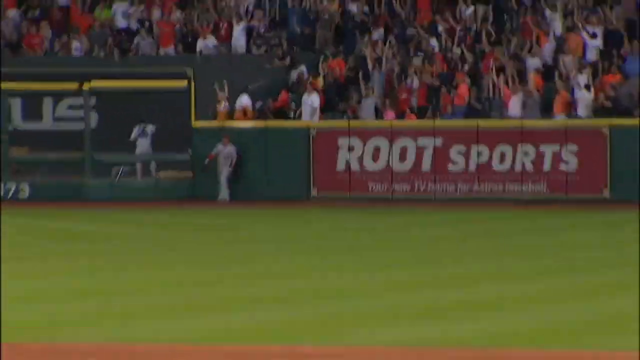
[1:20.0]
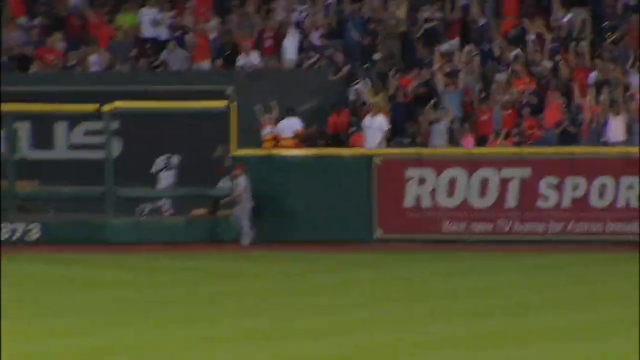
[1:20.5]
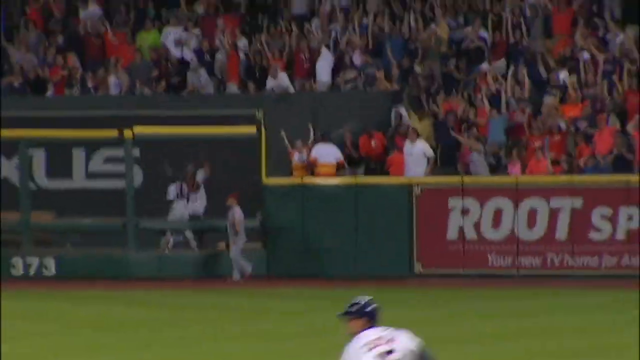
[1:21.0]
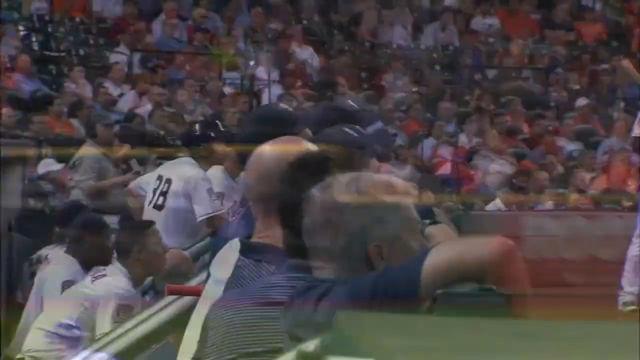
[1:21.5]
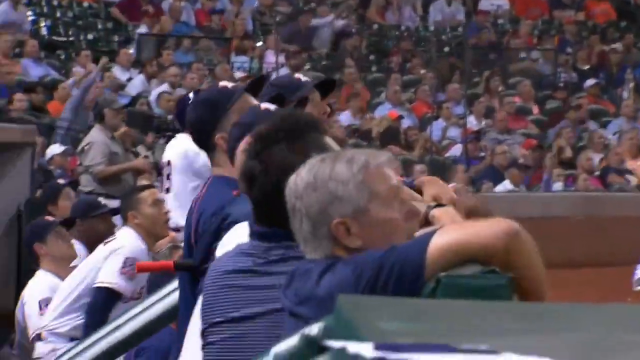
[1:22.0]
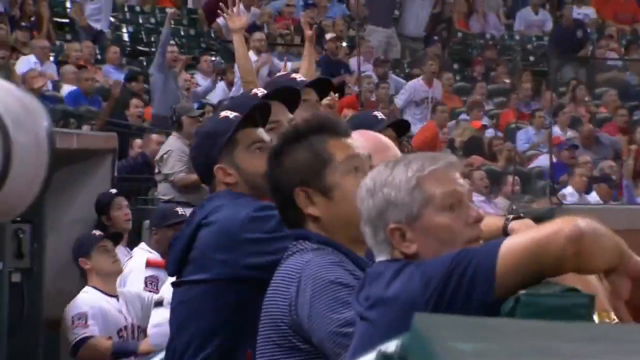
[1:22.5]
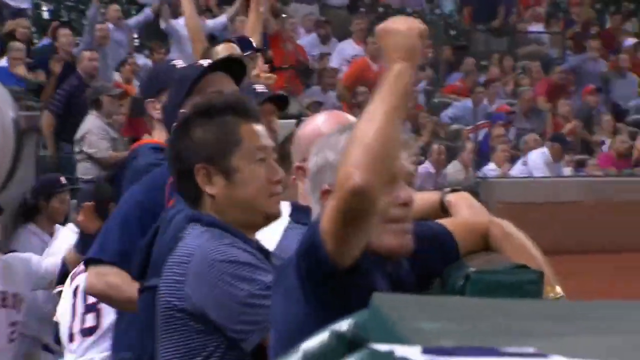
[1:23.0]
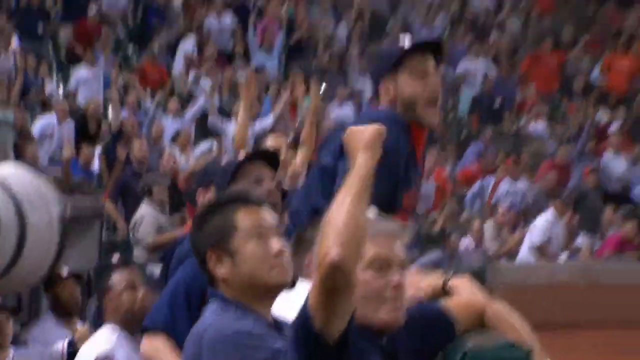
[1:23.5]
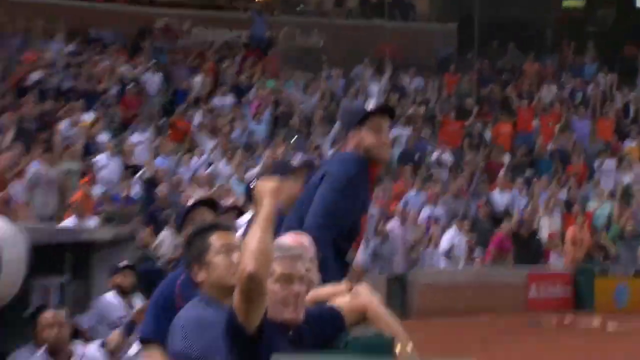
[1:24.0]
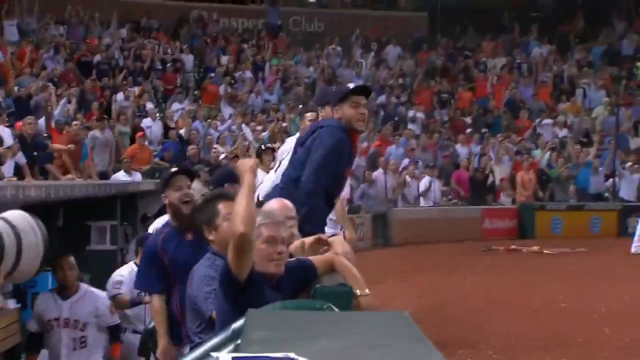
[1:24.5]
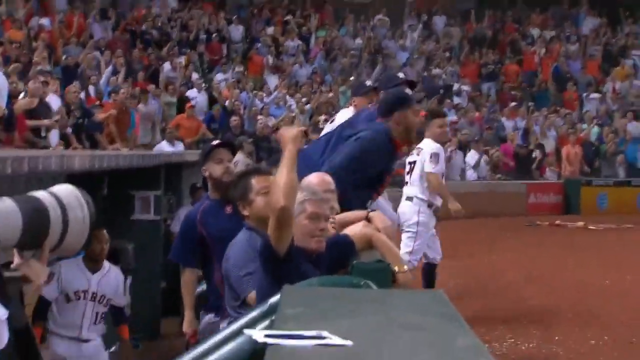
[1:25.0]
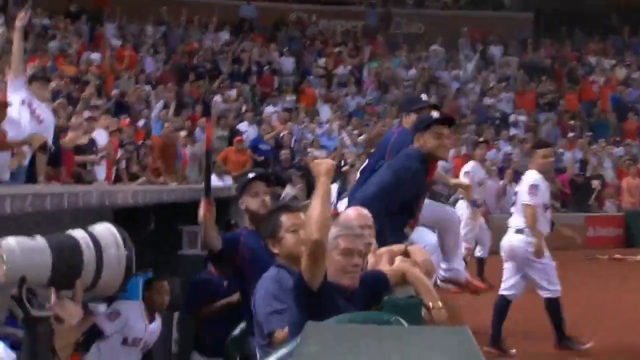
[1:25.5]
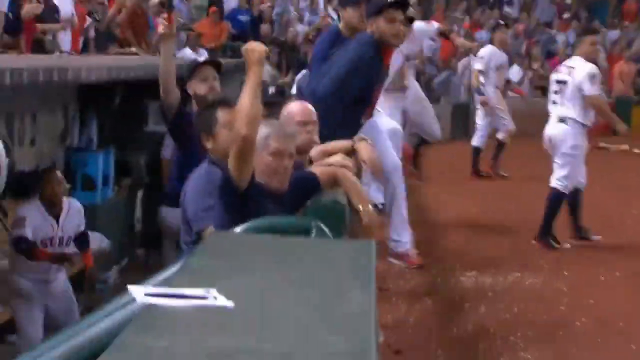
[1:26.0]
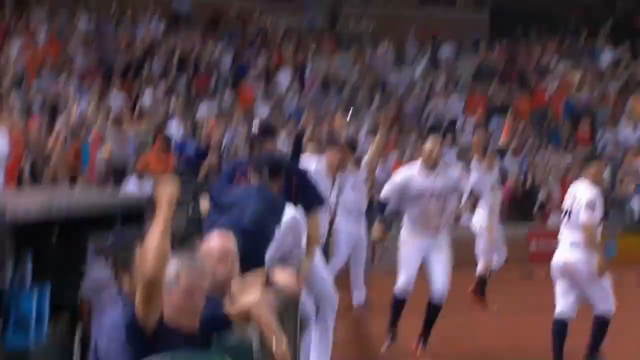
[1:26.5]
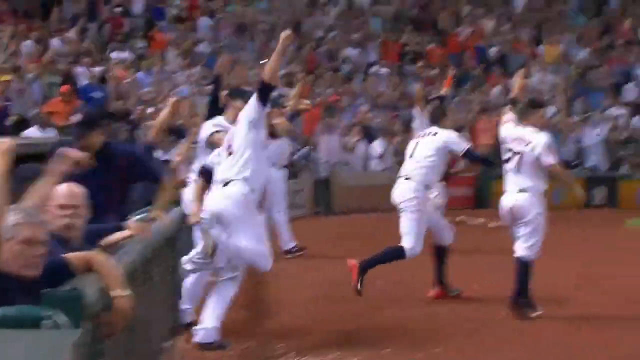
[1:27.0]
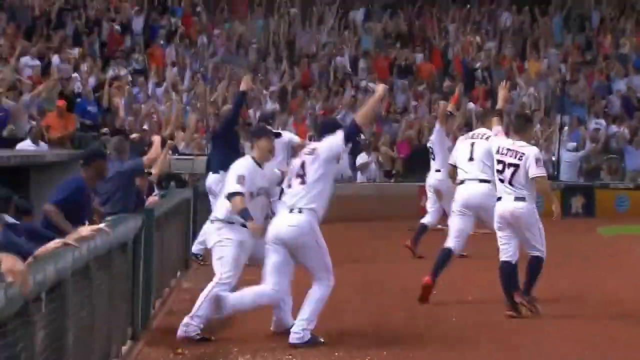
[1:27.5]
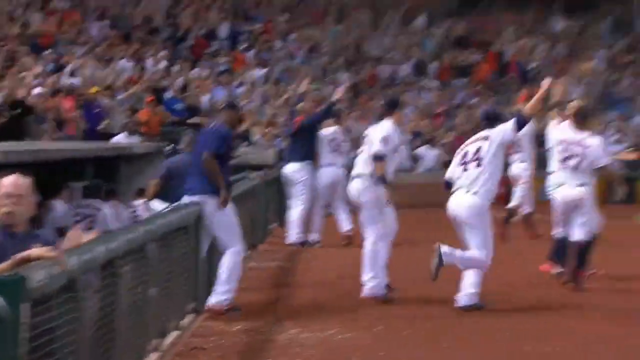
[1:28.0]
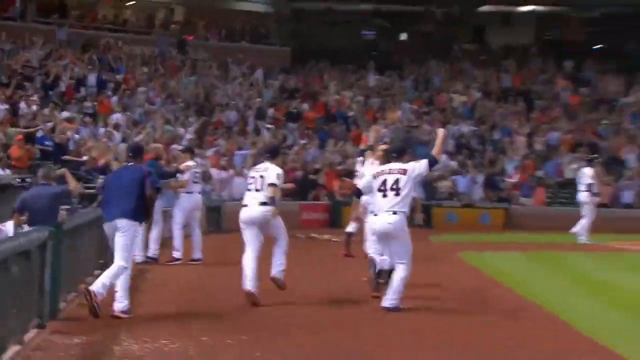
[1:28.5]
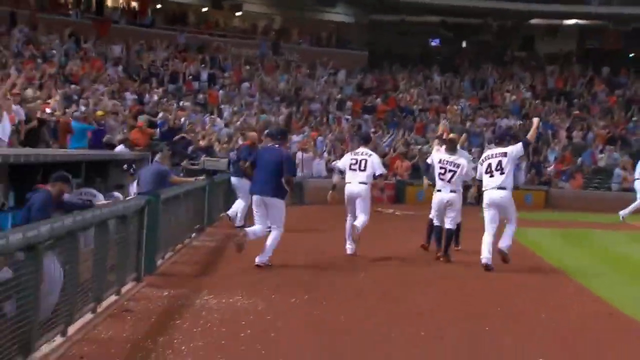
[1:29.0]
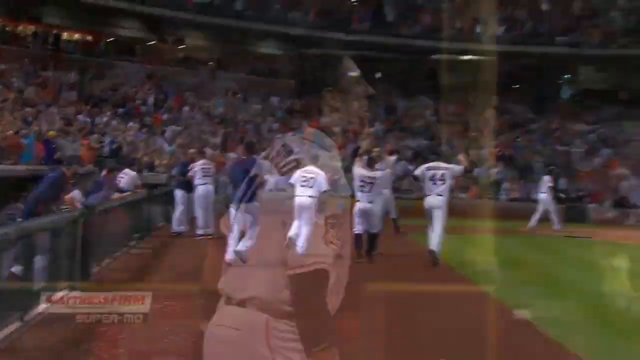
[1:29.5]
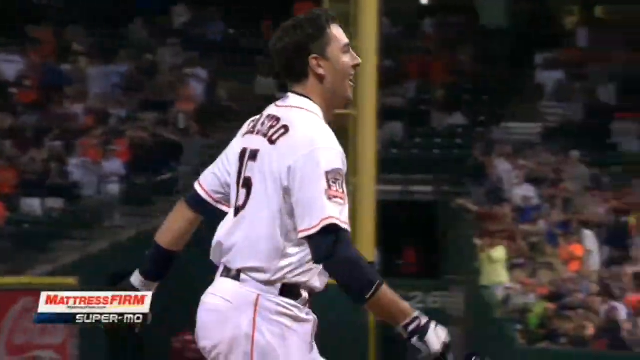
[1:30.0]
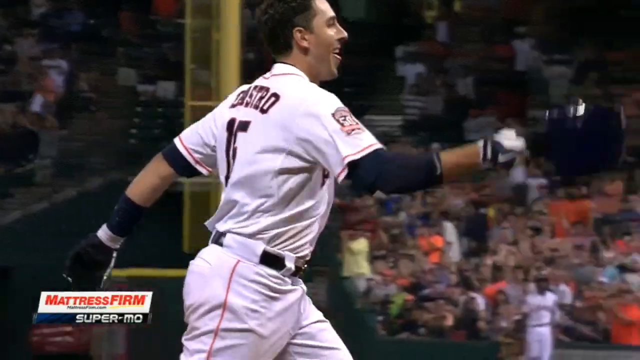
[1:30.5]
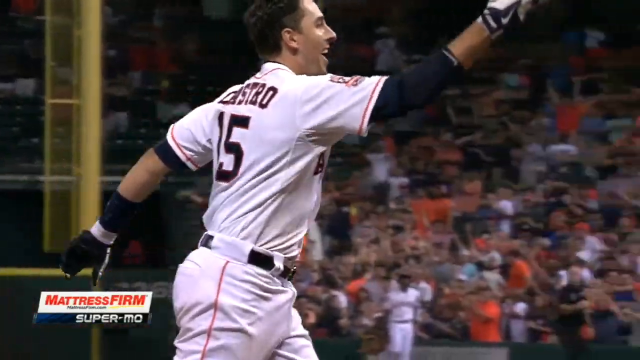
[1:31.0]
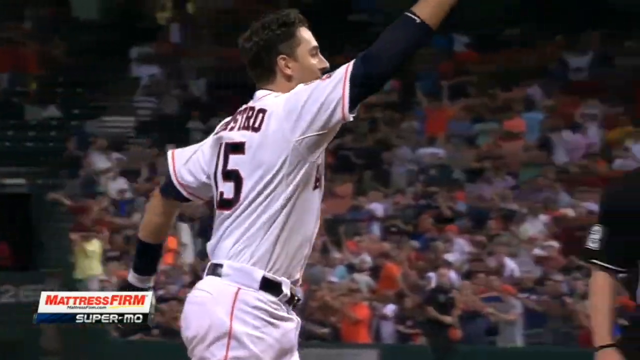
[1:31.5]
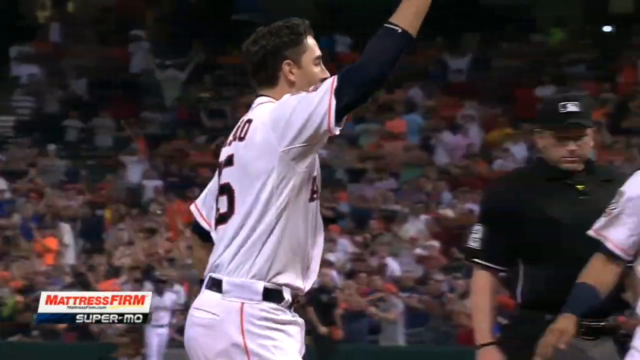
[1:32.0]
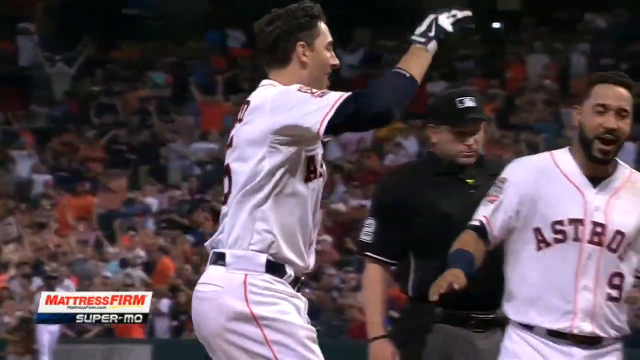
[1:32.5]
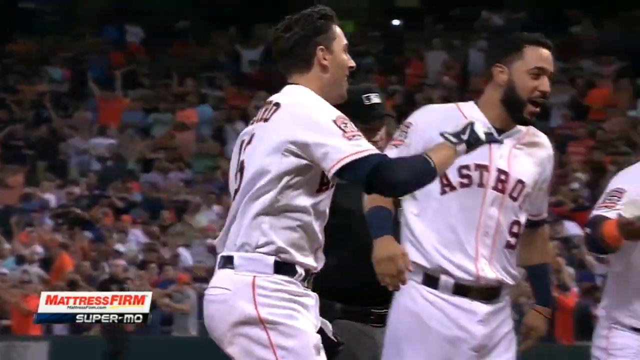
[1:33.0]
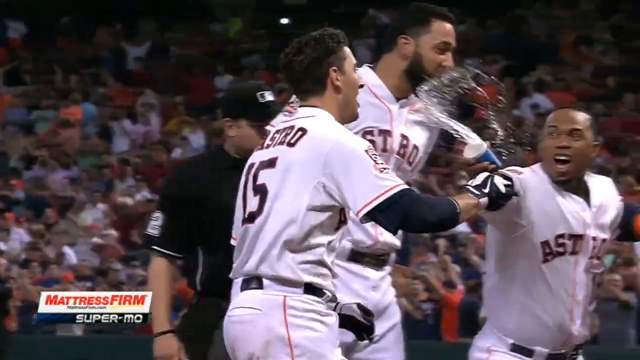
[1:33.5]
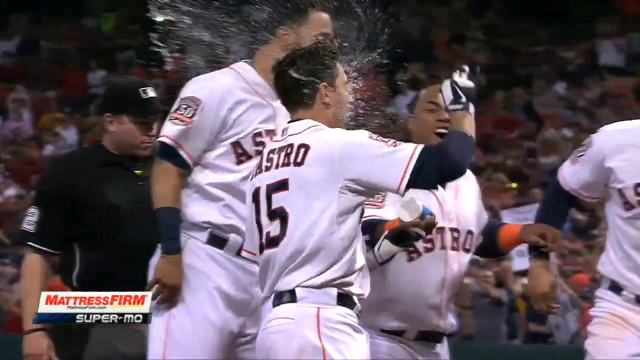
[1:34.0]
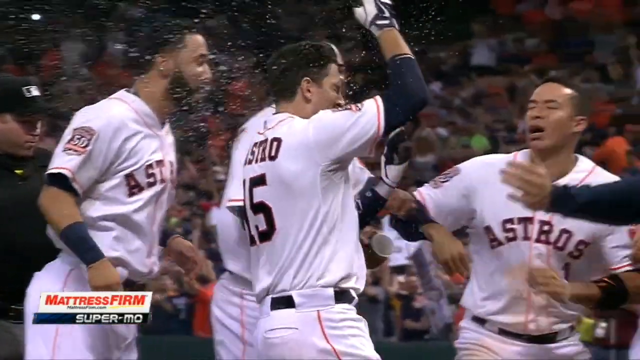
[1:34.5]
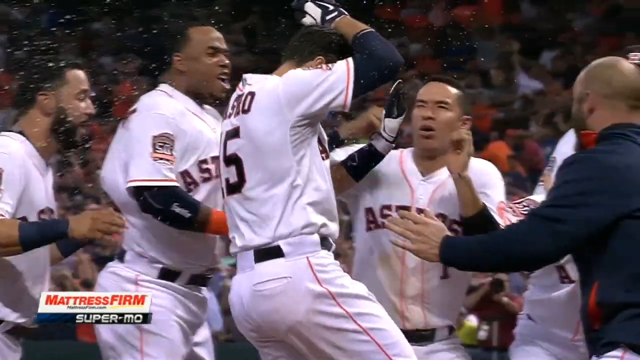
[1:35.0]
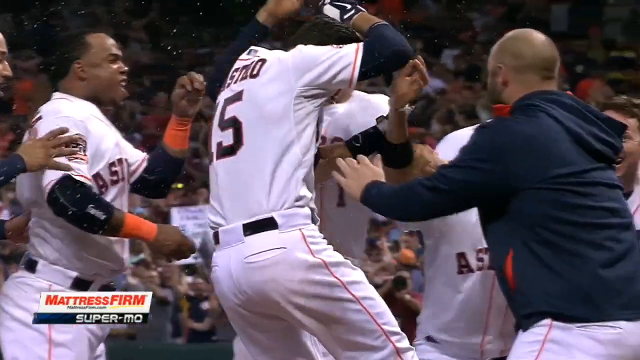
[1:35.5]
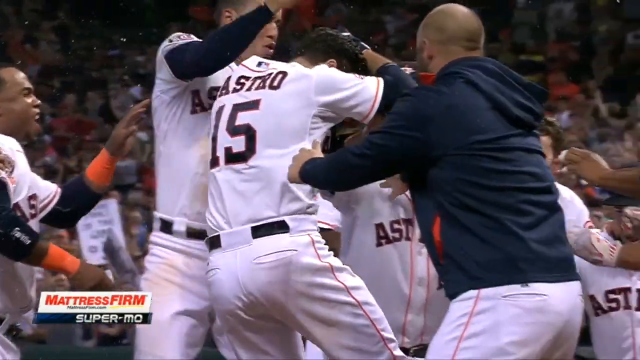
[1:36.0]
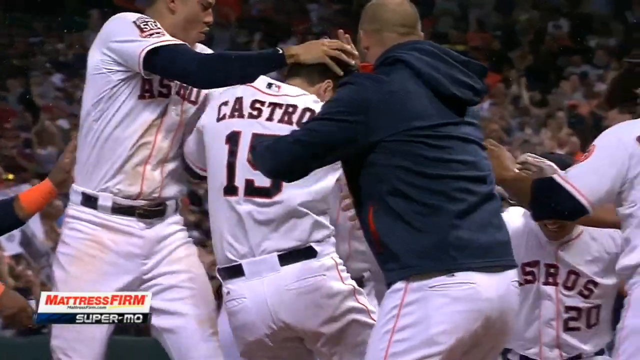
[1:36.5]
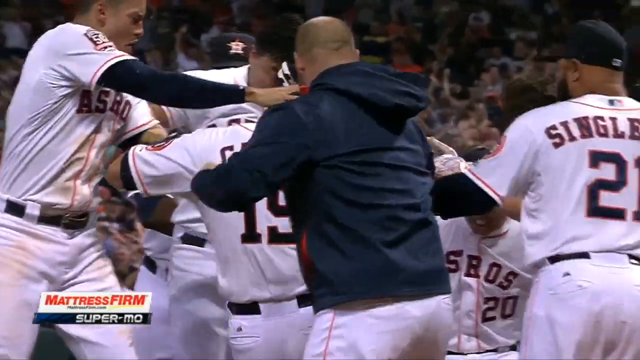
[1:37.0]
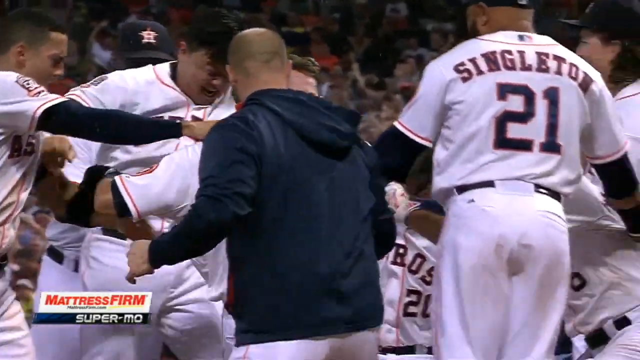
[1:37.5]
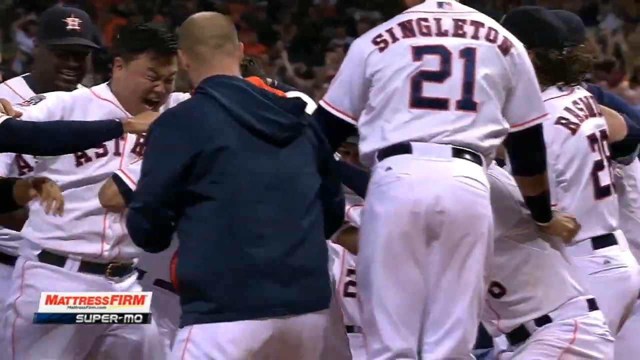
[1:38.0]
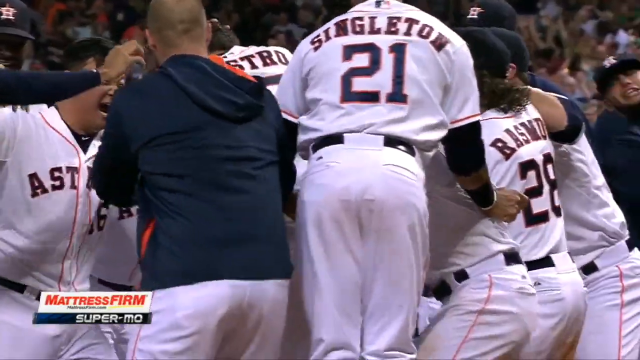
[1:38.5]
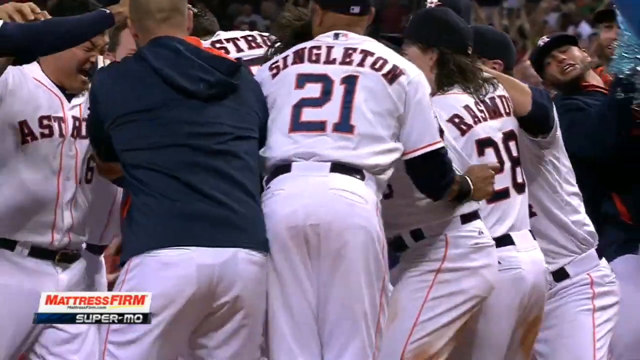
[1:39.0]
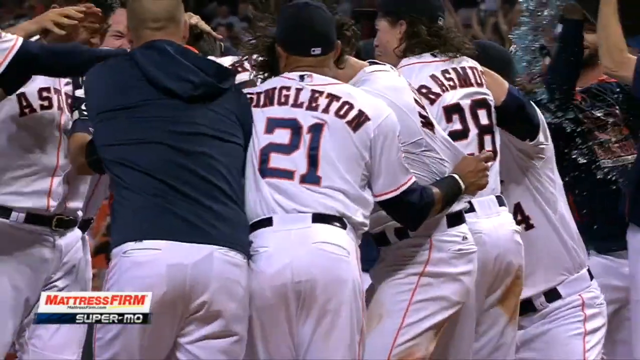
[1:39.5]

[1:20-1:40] A different replay angle shows the ball landing over the fence, which carries sponsors including the brand name Lexus, with the number 373 underneath showing the distance from home plate. The Angels outfielder stands along the fence in a bit of disbelief. The view then goes back to the Houston Astros dugout, where teammates, as the ball is hit deep to right center field, immediately jump out of the dugout, fist bump, and run toward home plate to congratulate the player, who tosses his helmet right before reaching home plate. One player splashes him with a cup of water as he jumps toward home plate. In the bottom left-hand corner, the replay is shown to be sponsored by Mattress Firm.